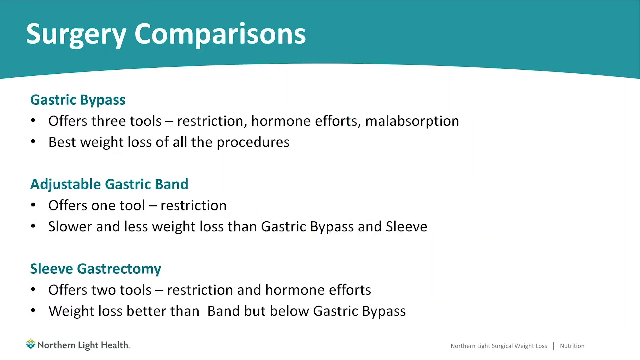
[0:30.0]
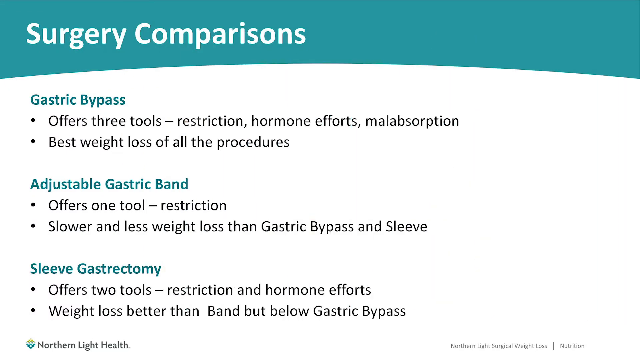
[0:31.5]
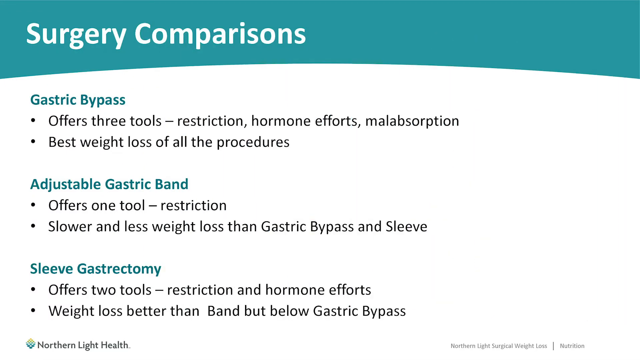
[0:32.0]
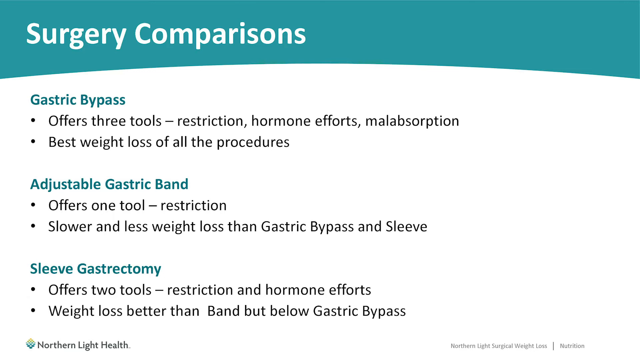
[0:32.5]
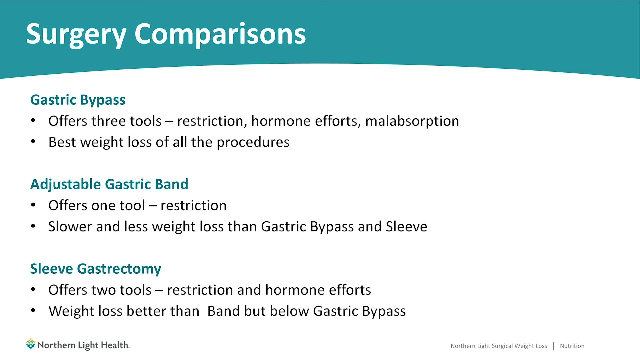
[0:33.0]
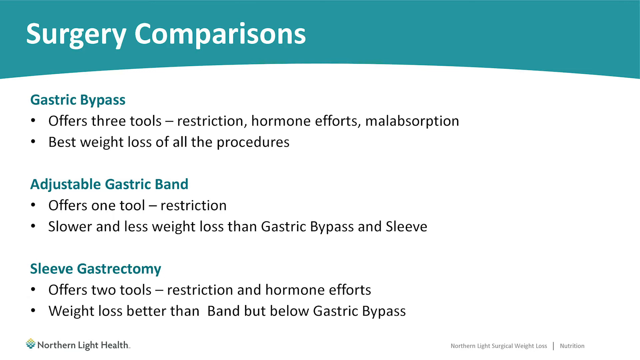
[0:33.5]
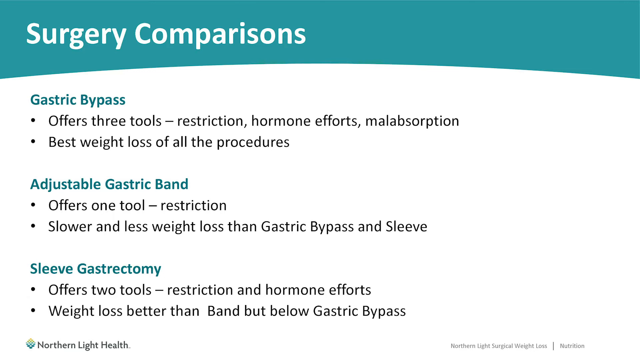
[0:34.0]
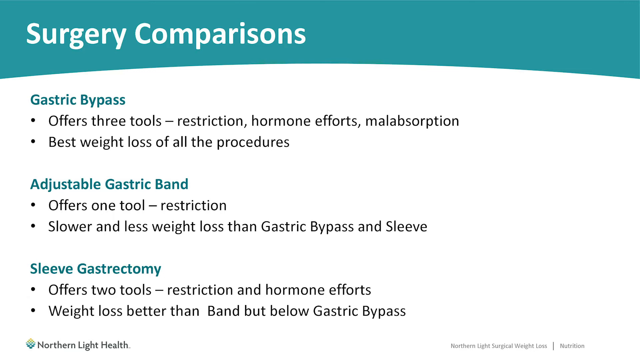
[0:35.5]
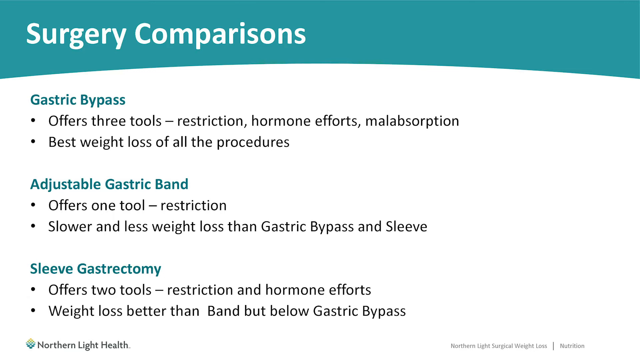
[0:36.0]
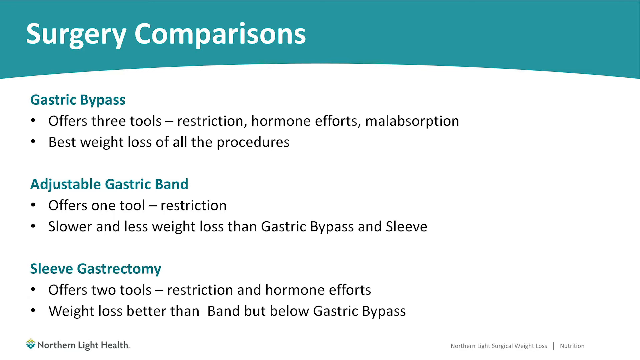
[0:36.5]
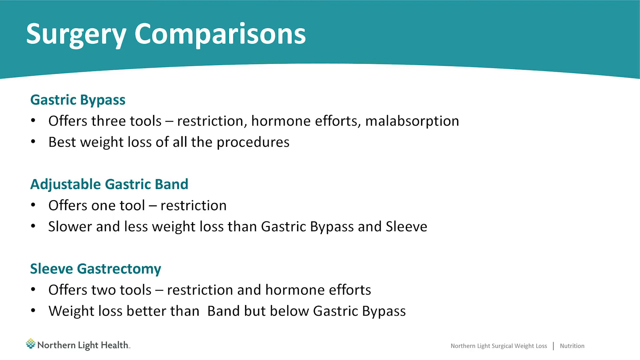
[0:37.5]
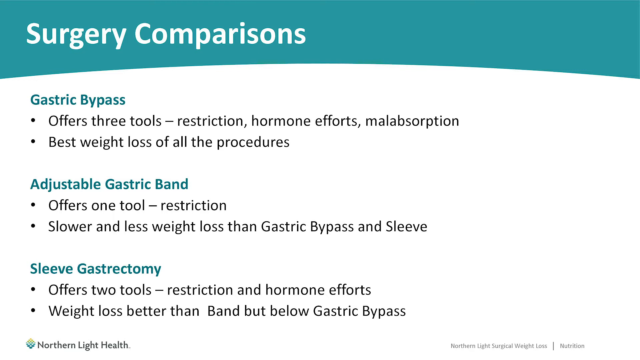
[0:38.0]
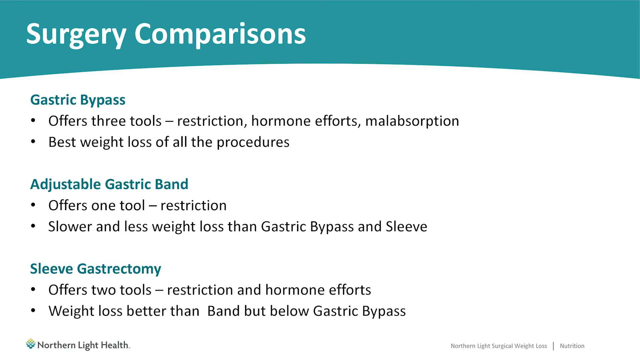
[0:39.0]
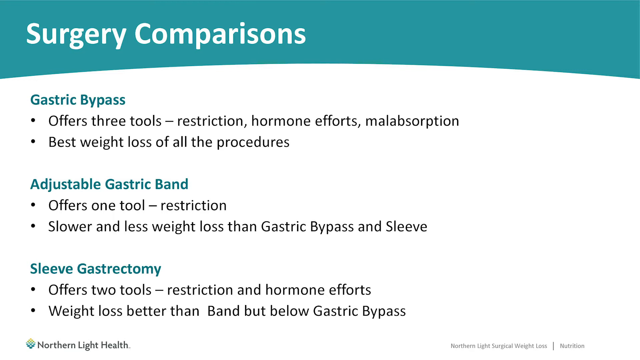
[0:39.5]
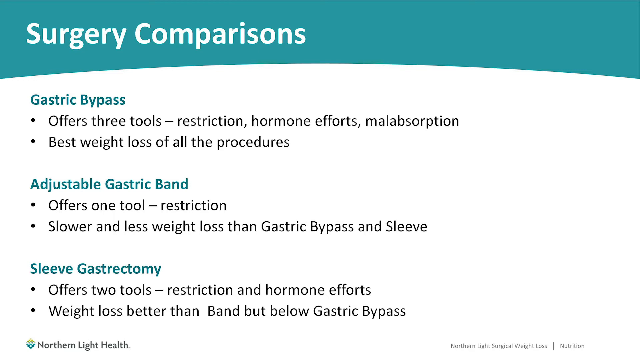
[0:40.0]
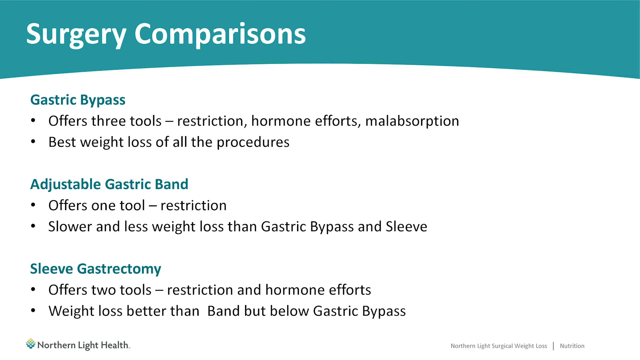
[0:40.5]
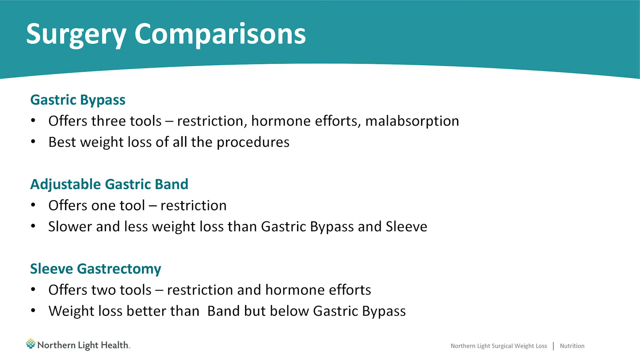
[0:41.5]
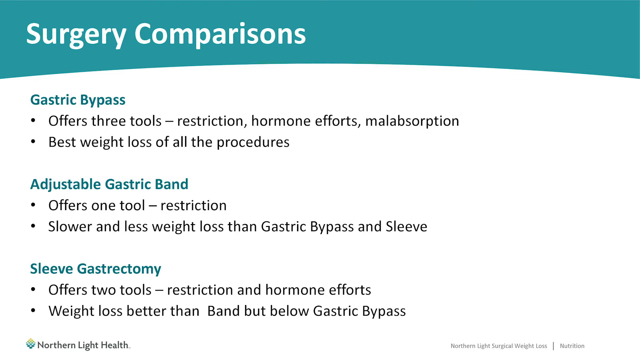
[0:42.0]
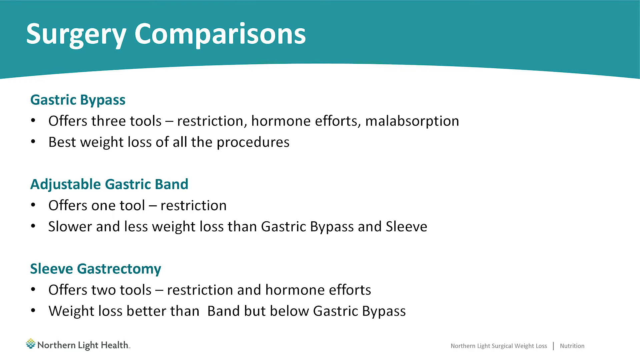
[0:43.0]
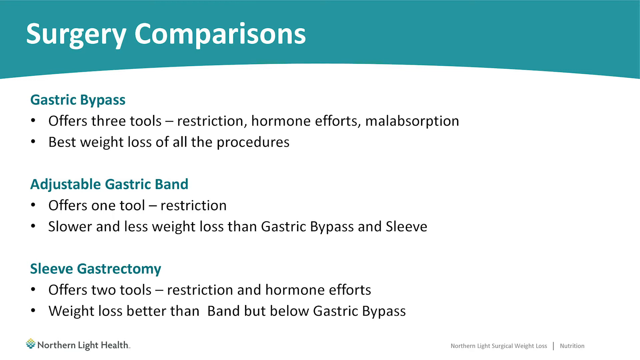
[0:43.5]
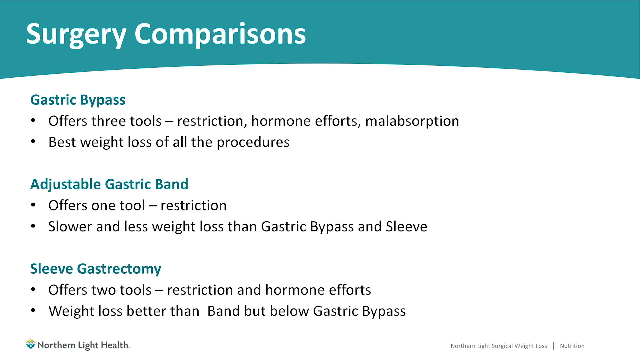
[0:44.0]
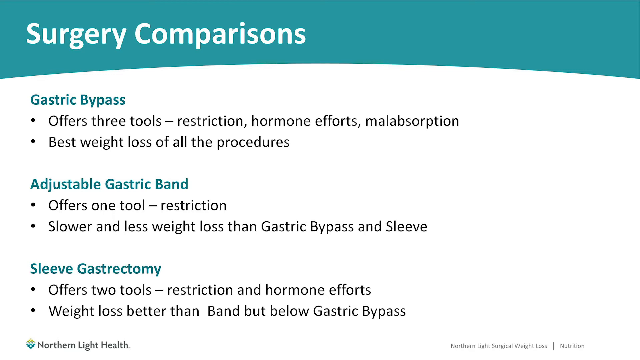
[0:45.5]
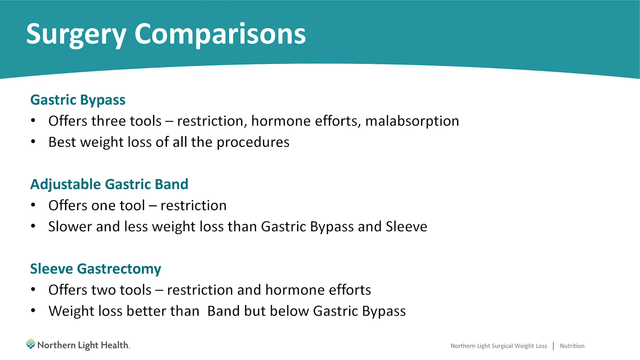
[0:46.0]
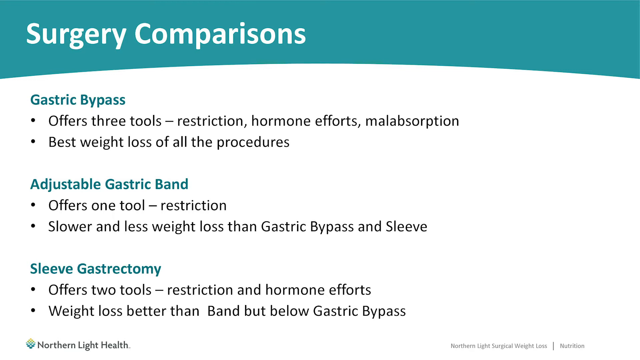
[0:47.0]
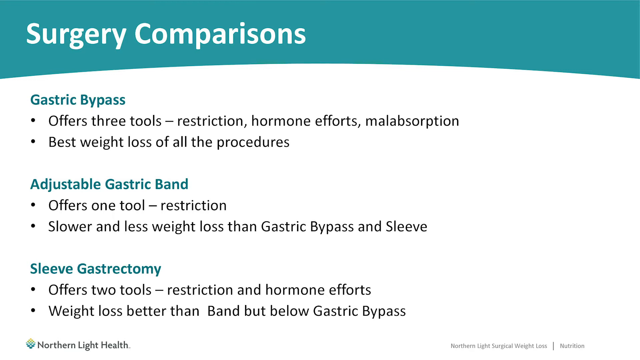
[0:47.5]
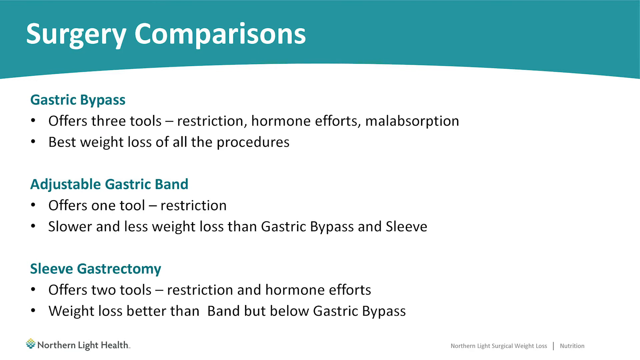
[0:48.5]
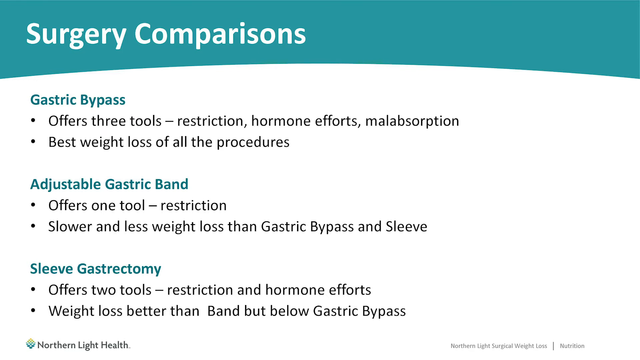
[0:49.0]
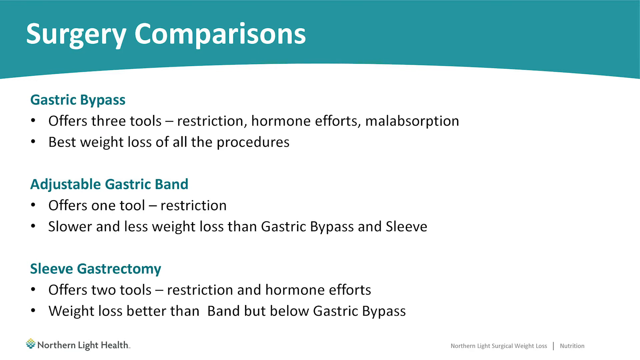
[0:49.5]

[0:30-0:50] A slide titled "Surgery Comparisons" lists three types of weight loss procedures: gastric bypass, adjustable gastric band, and sleeve gastrectomy. Each has two bullet points beneath it. Under gastric bypass: "offers three tools restriction hormone effects malabsorption" and "best weight loss of all the procedures." Under adjustable gastric band: "offers one tool restriction" and "slower and less weight loss than gastric bypass and sleeve." Under sleeve gastrectomy: "offers two tools restriction and hormone effects" and "weight loss better than band but below gastric bypass." The title is in white font against a blue decorative background. Each procedure name is in a blue font, the bullet points are in a black font, and the background is white. A yellow, green, and blue logo reading "Northern Light Health" is on the bottom left-hand side, and in the bottom right-hand side are more words in black font that are too small to read.